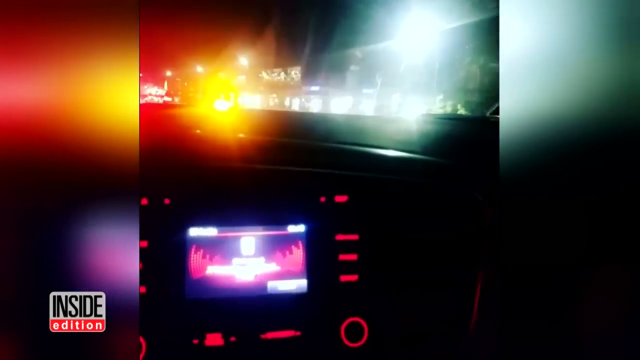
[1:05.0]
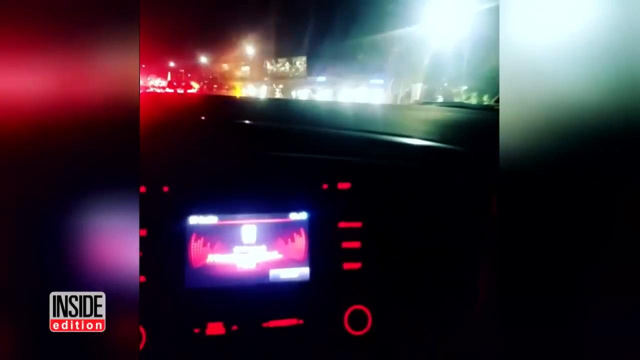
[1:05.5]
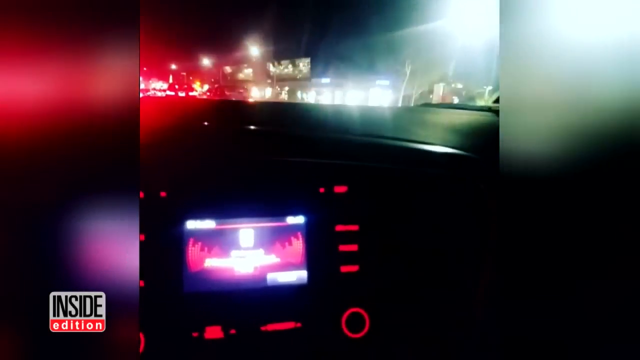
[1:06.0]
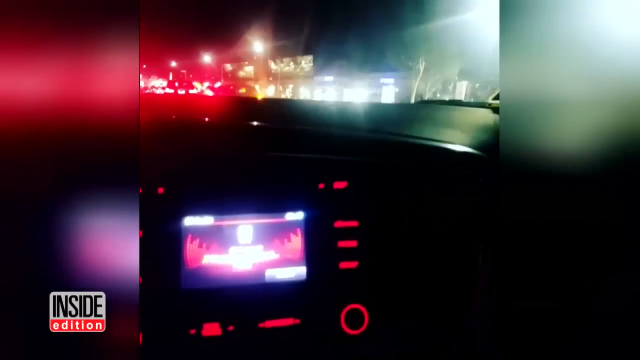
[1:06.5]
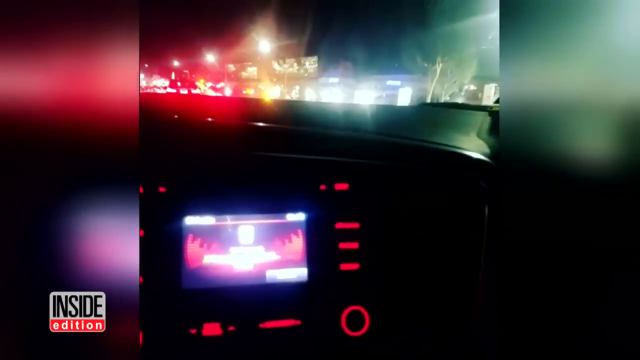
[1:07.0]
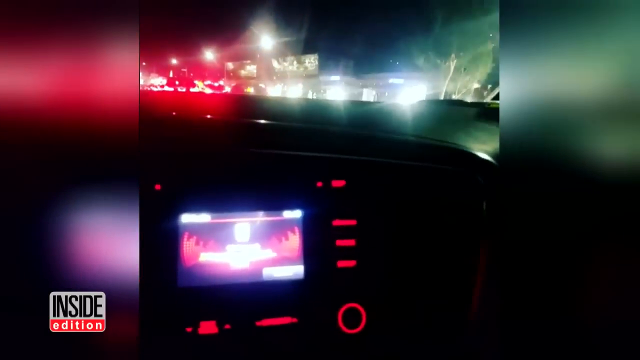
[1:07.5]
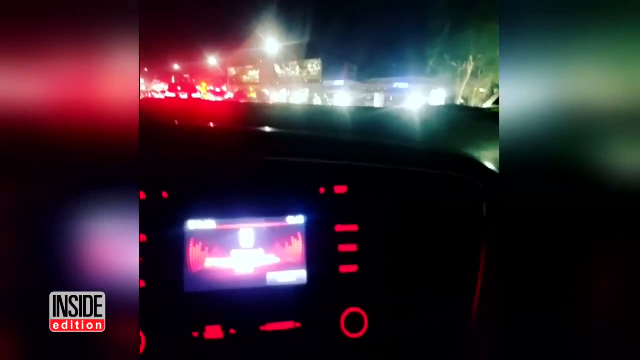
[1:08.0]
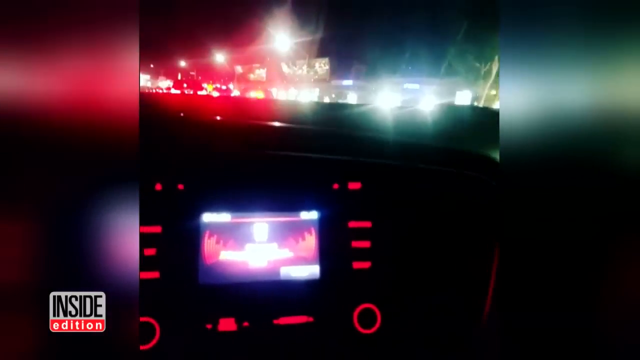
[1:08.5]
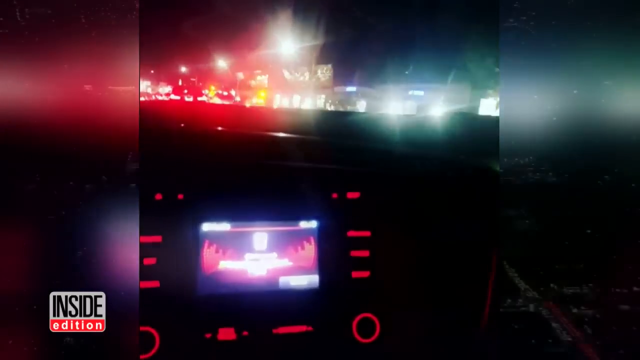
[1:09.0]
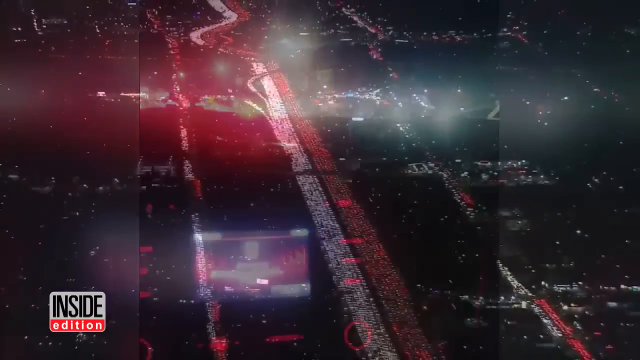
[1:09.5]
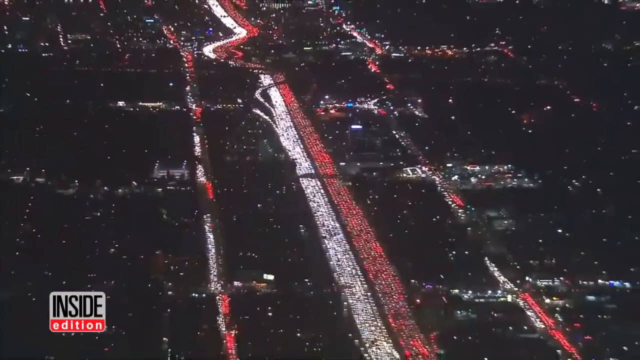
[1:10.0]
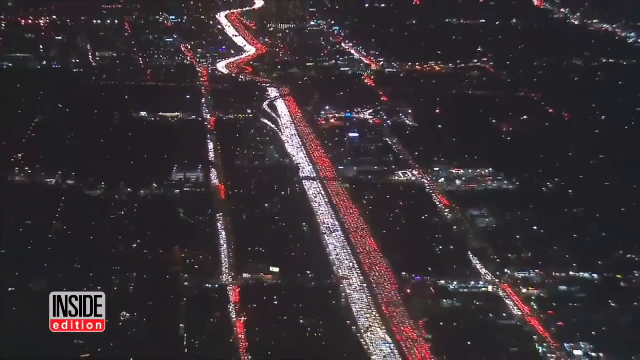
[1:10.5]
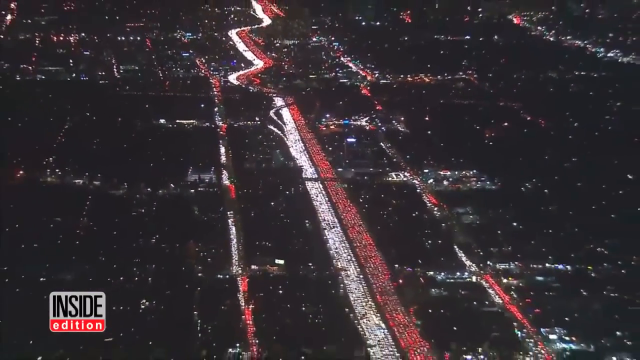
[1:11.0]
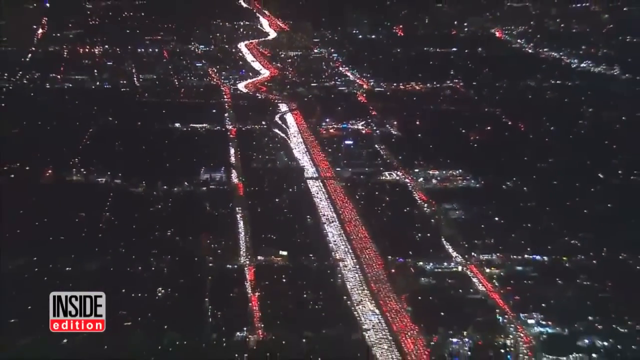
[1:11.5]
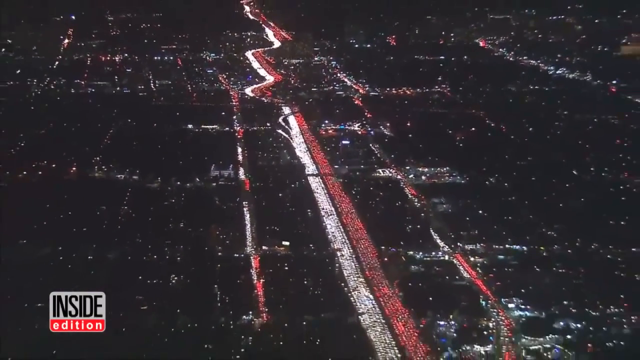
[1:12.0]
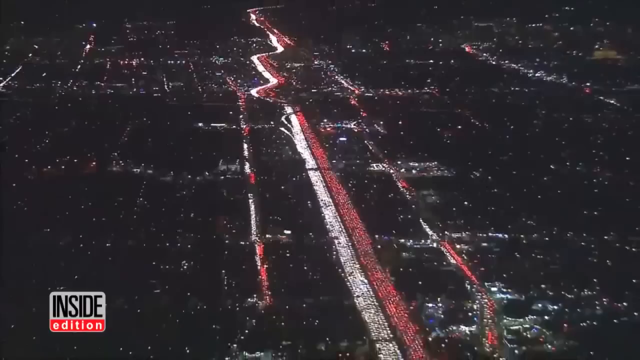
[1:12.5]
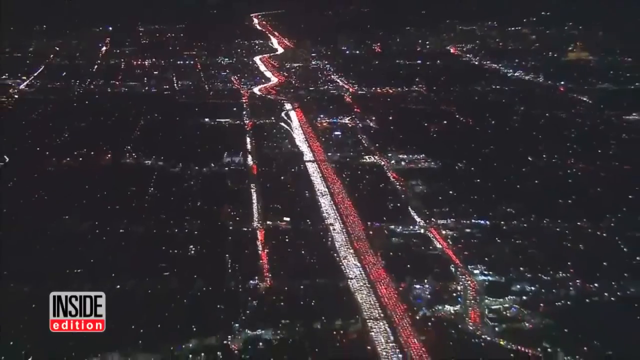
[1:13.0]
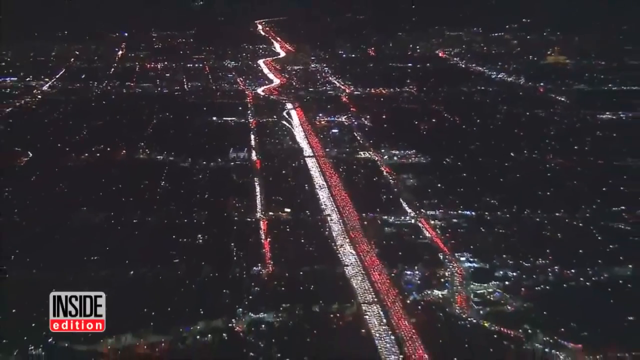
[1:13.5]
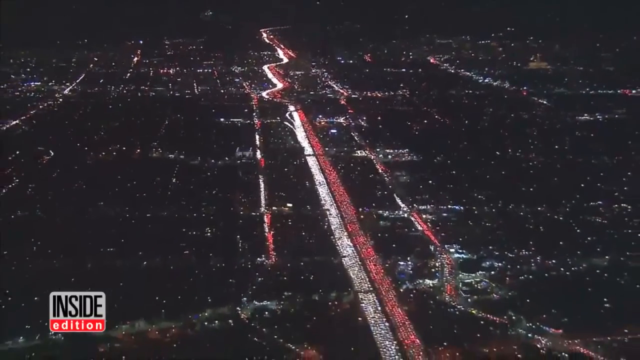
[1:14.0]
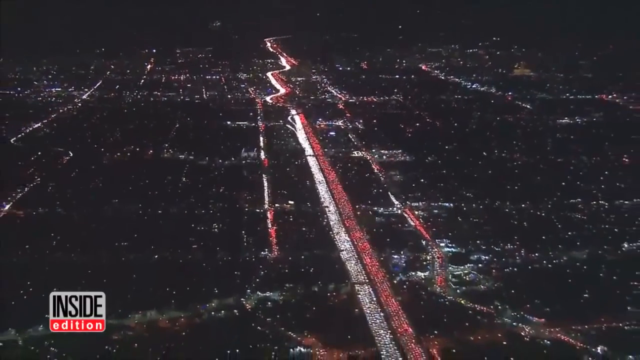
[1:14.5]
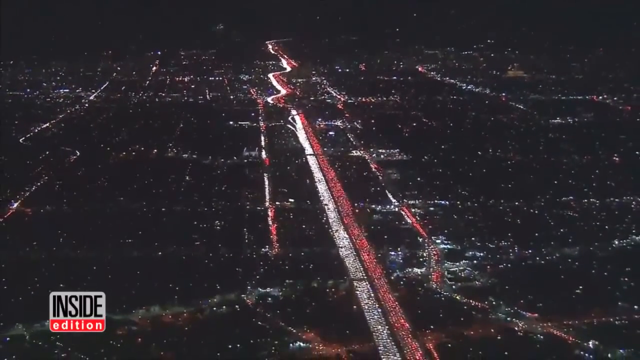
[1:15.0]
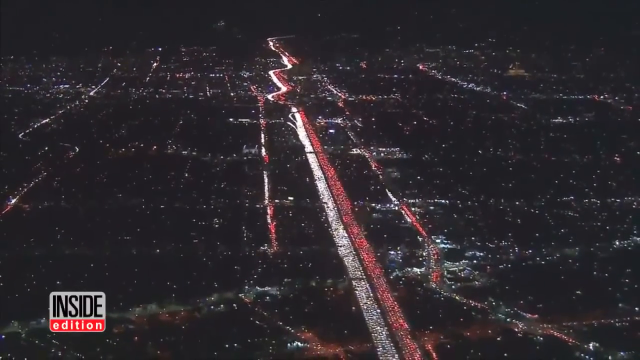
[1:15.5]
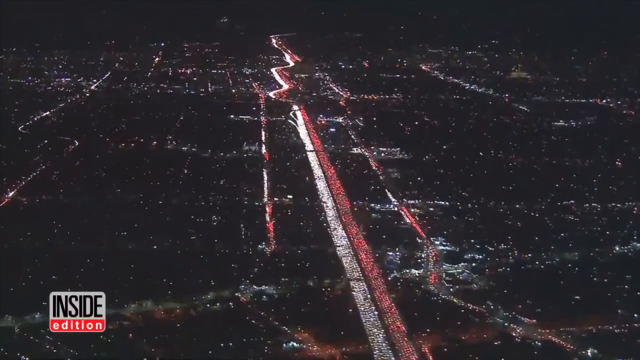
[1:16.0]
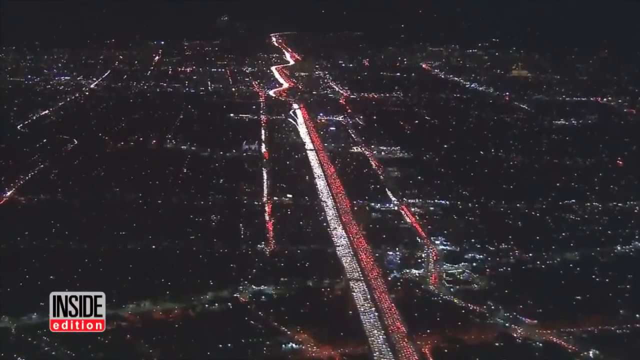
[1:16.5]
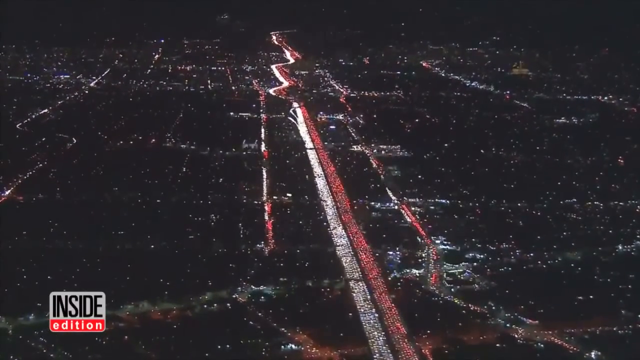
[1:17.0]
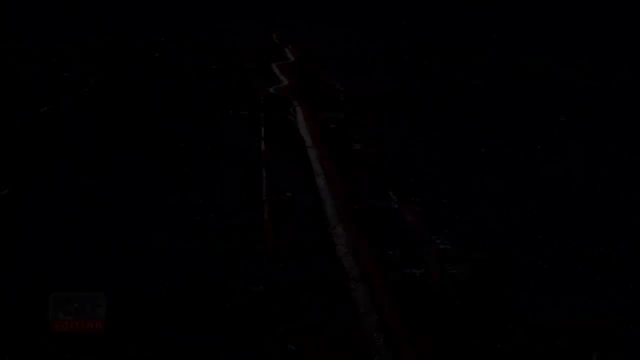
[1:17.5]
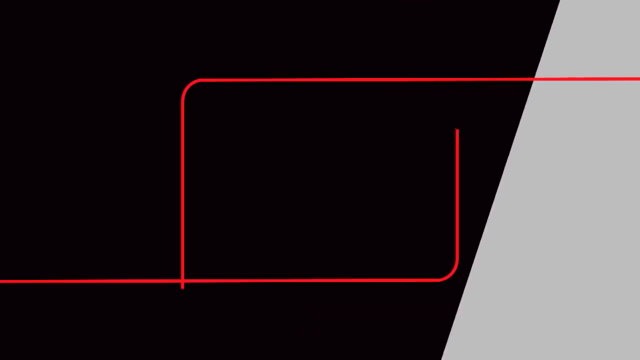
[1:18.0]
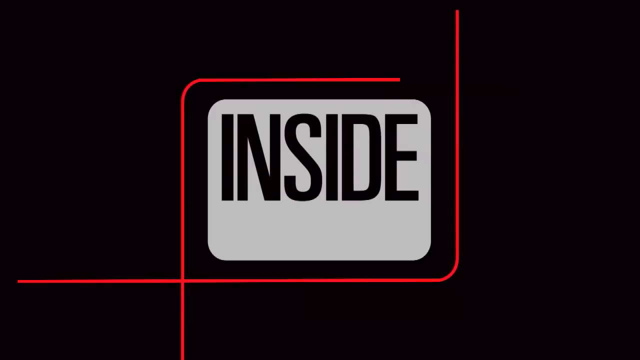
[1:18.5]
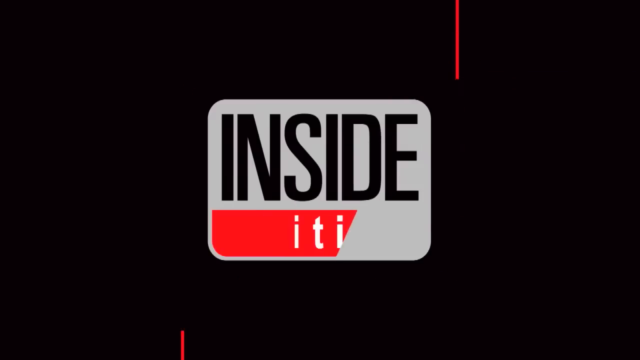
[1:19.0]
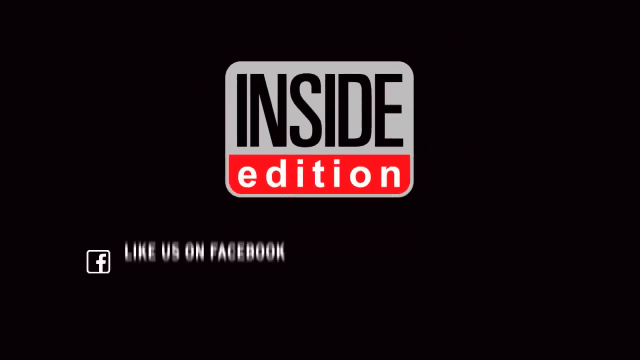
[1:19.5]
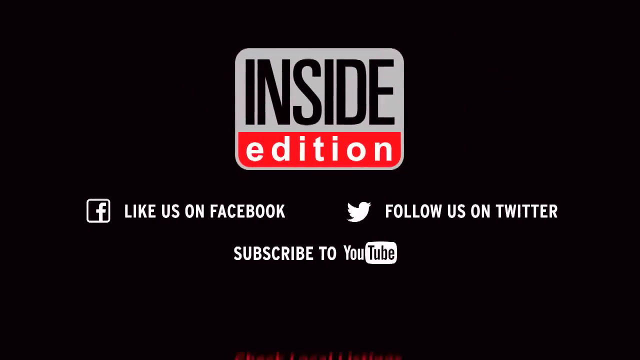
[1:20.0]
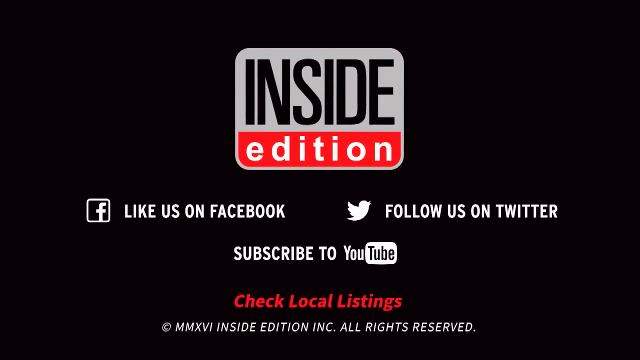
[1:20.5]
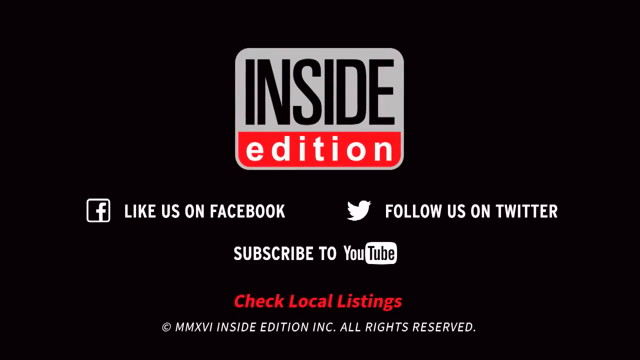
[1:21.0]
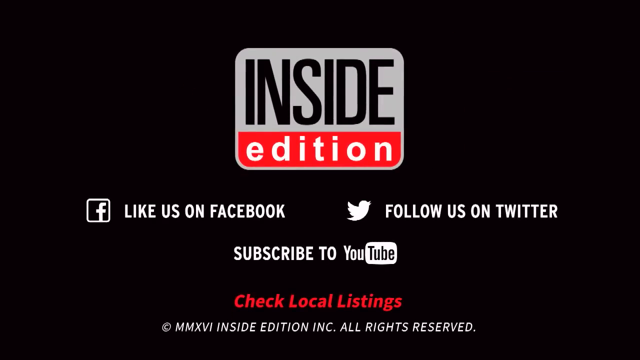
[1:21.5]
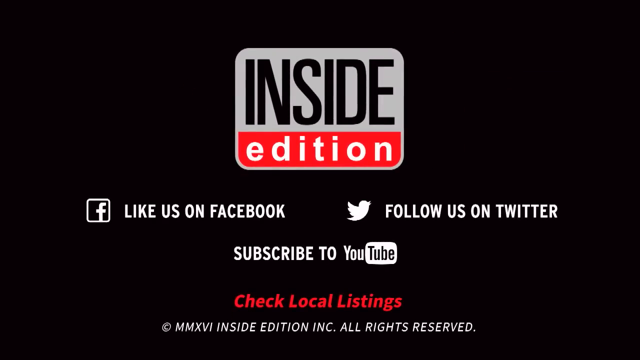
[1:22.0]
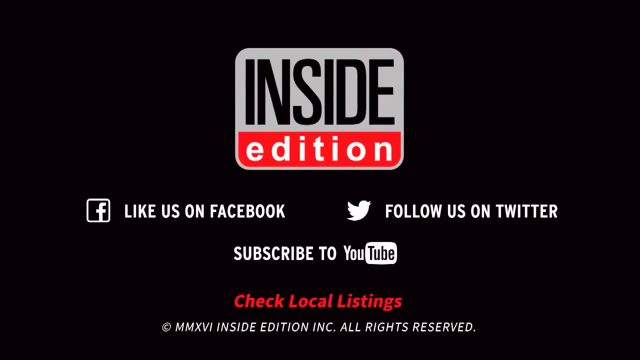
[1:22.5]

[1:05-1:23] More dash cam footage and clips recorded by people while driving are shown, along with helicopter footage of the traffic jam from afar, zooming out to show how far it goes. The final shot shows the generic Inside Edition logo on a black screen with white and red text advertising their social media, such as liking them on Facebook, following on Twitter and subscribing on YouTube. At the very bottom, text says to check local listings, and below that a copyright line reads Inside Edition Incorporated, all rights reserved, with the year in Roman numerals.